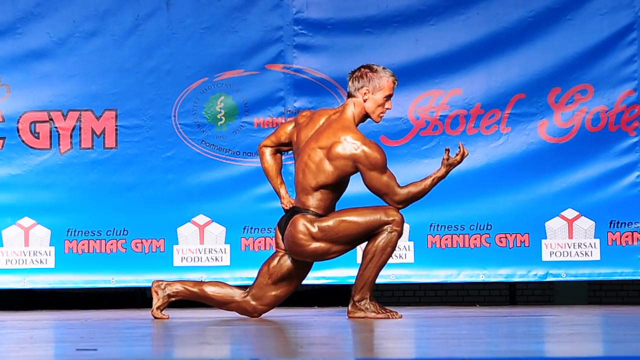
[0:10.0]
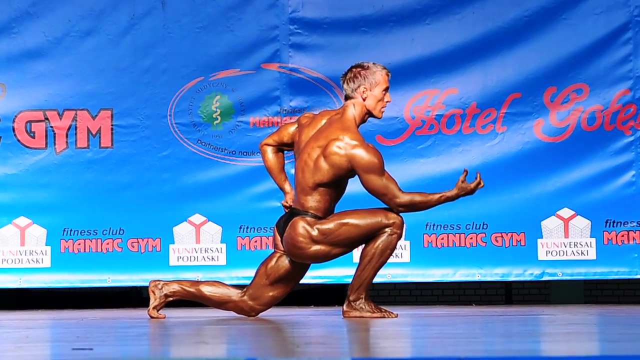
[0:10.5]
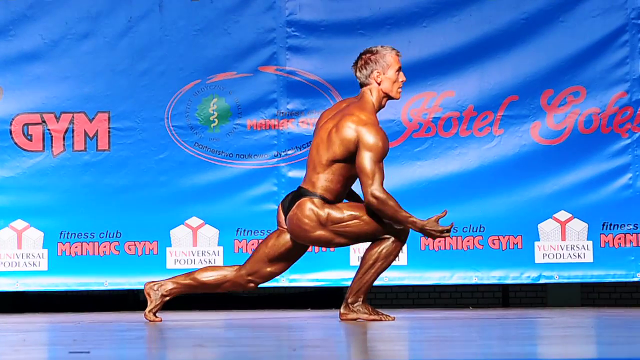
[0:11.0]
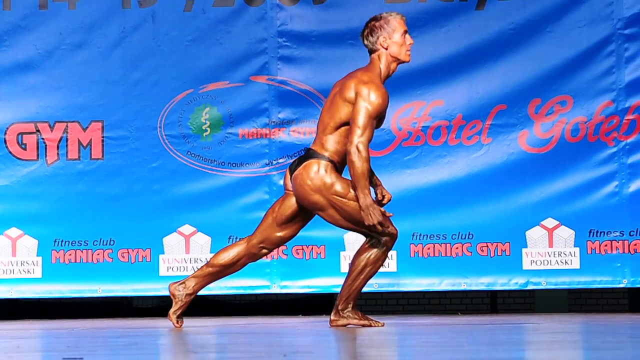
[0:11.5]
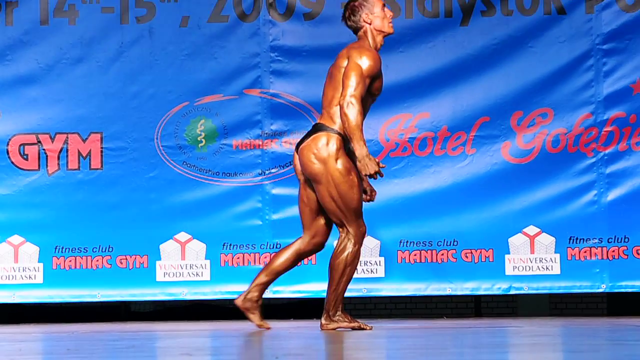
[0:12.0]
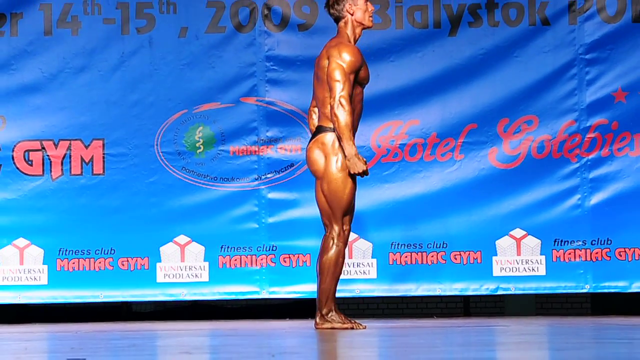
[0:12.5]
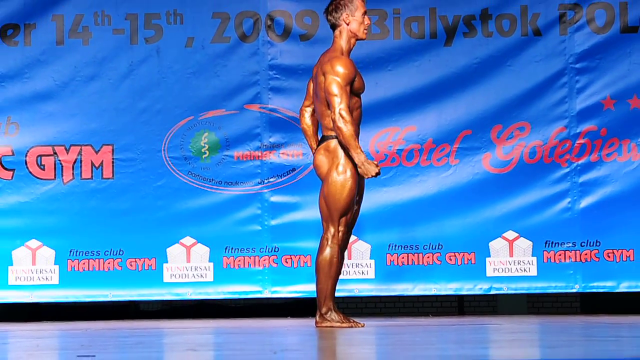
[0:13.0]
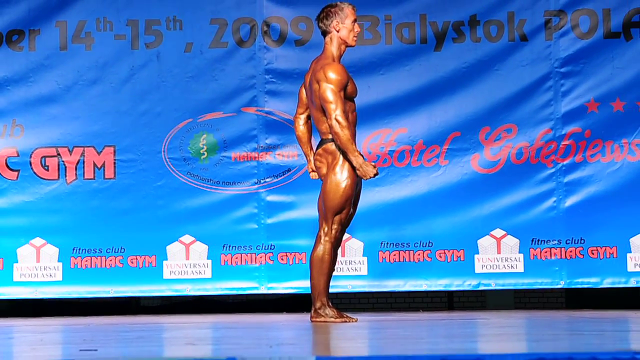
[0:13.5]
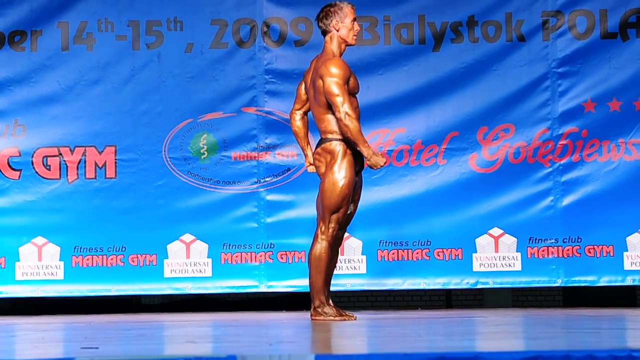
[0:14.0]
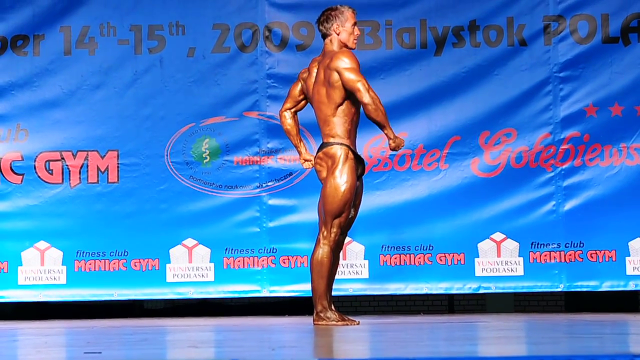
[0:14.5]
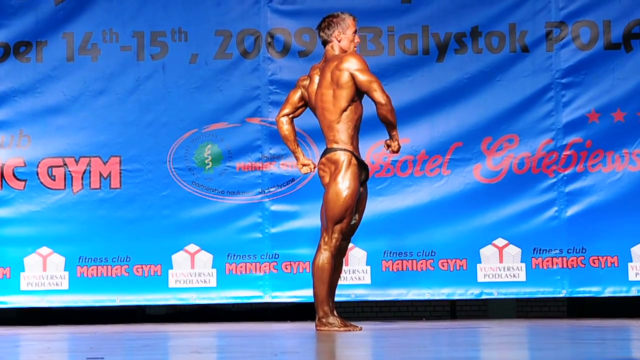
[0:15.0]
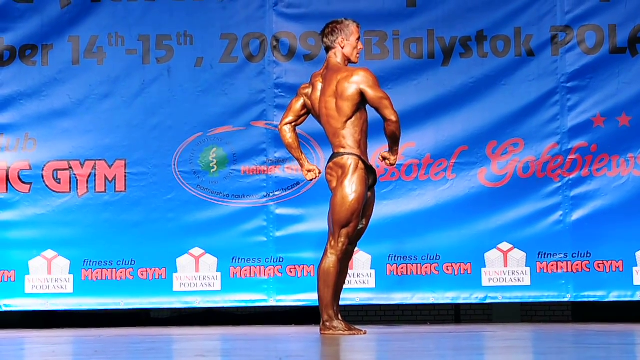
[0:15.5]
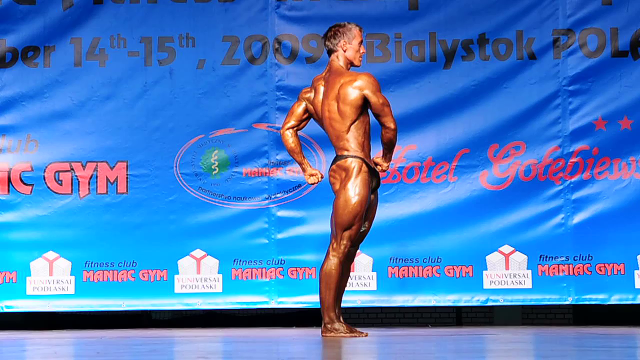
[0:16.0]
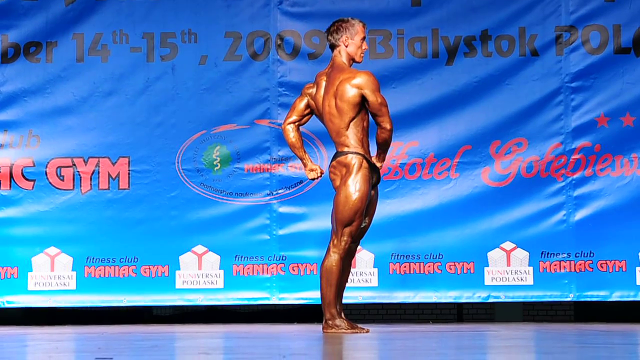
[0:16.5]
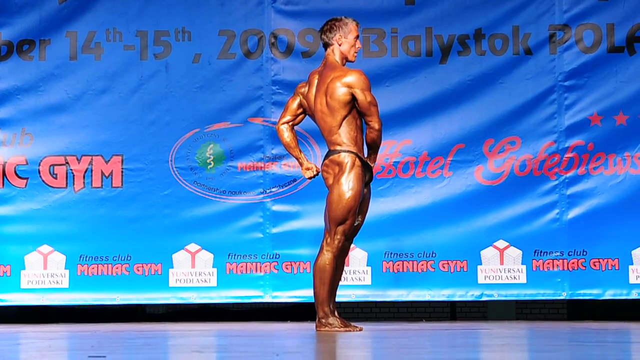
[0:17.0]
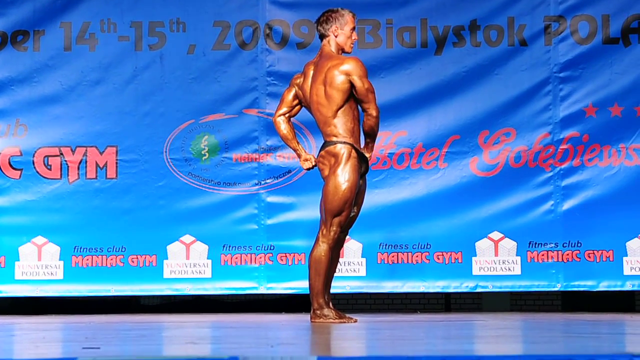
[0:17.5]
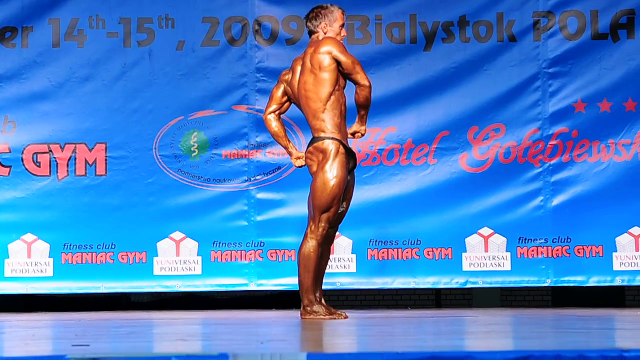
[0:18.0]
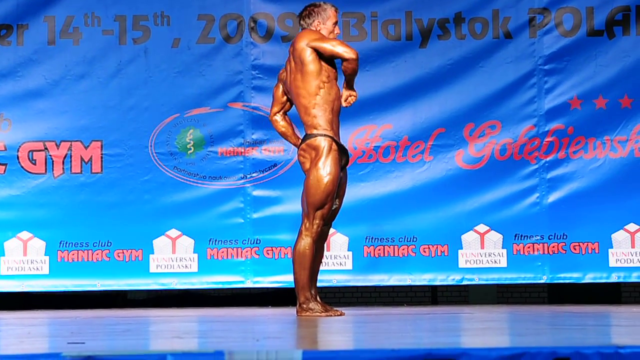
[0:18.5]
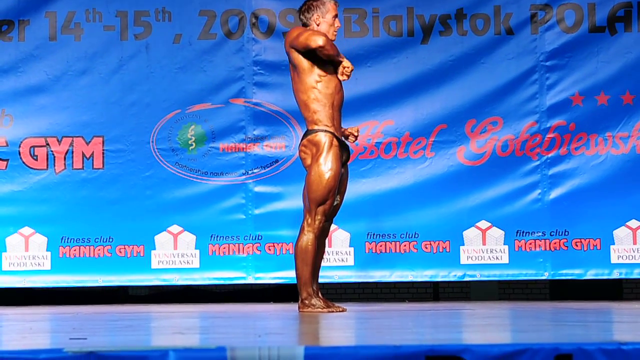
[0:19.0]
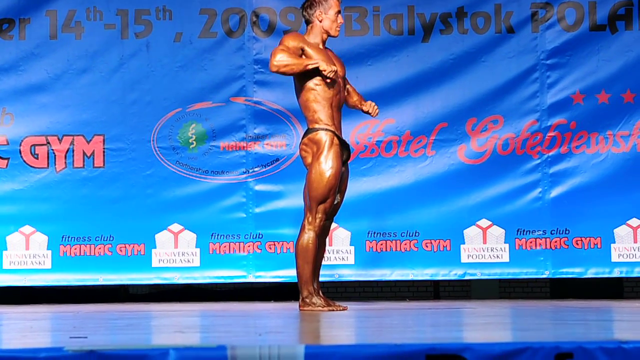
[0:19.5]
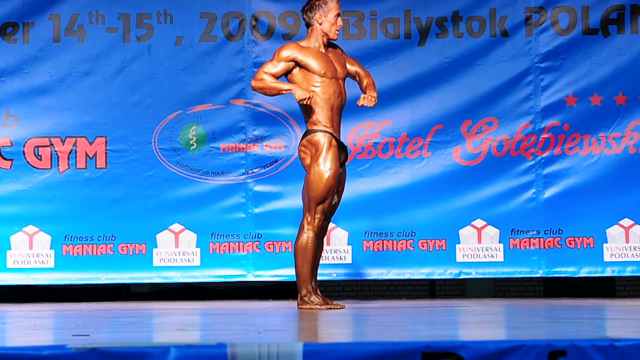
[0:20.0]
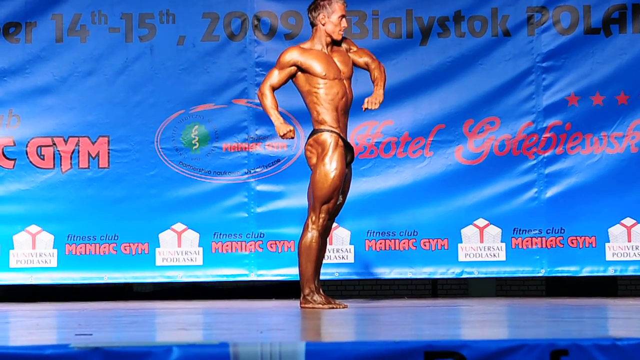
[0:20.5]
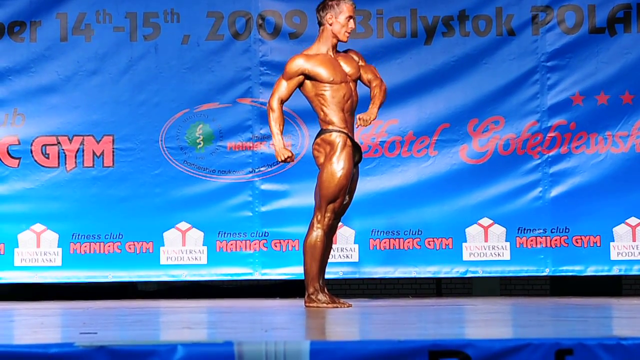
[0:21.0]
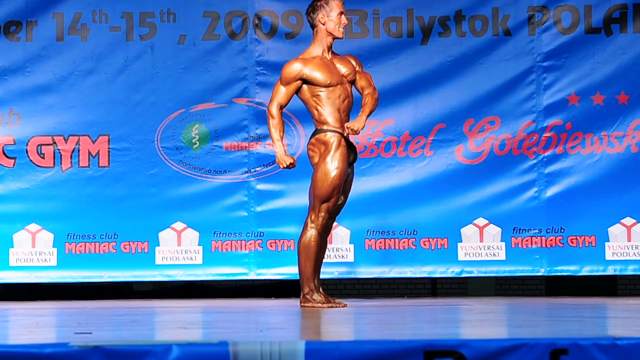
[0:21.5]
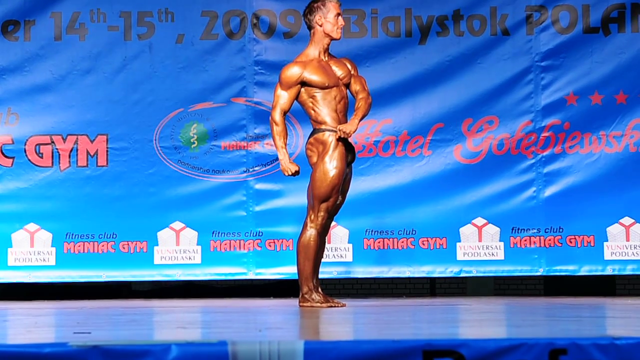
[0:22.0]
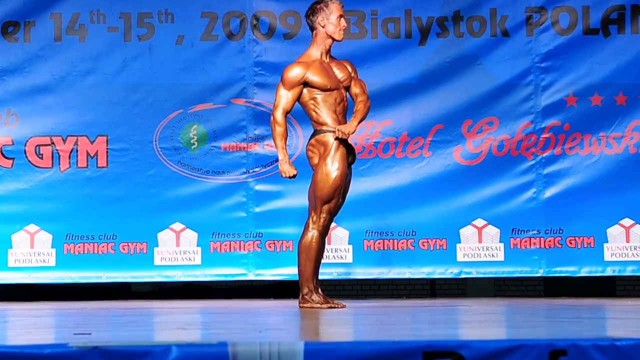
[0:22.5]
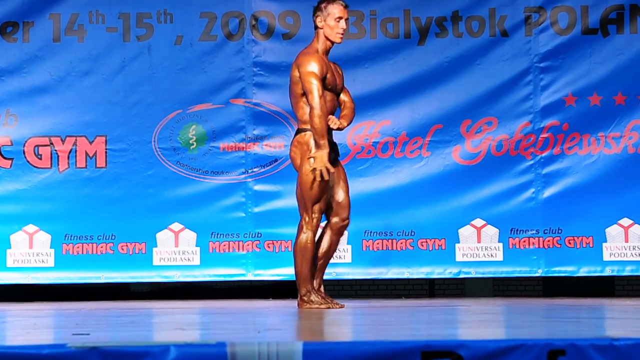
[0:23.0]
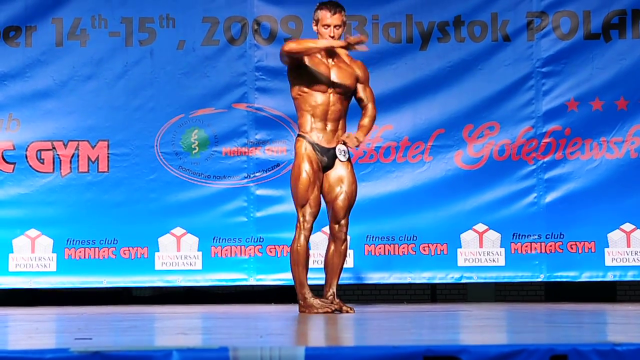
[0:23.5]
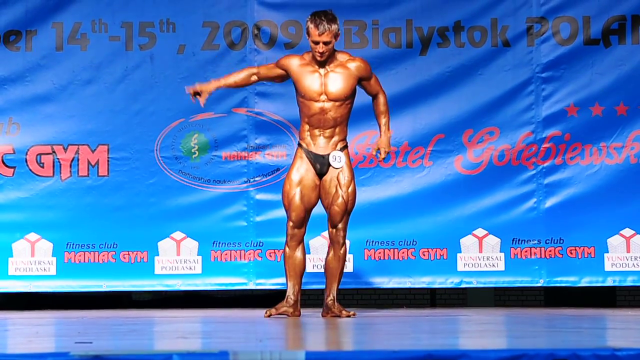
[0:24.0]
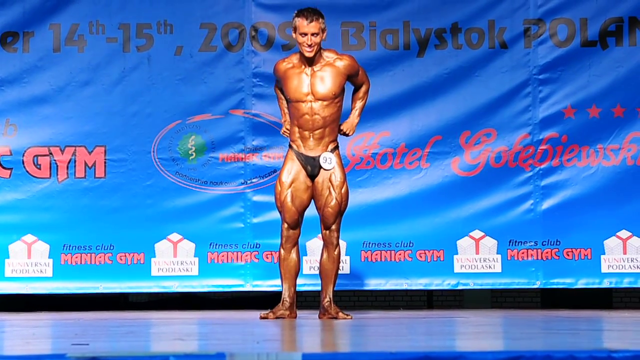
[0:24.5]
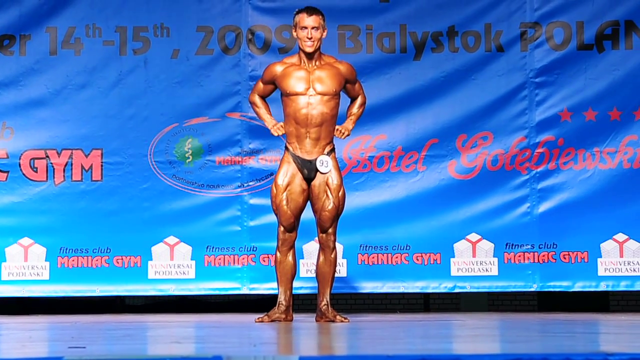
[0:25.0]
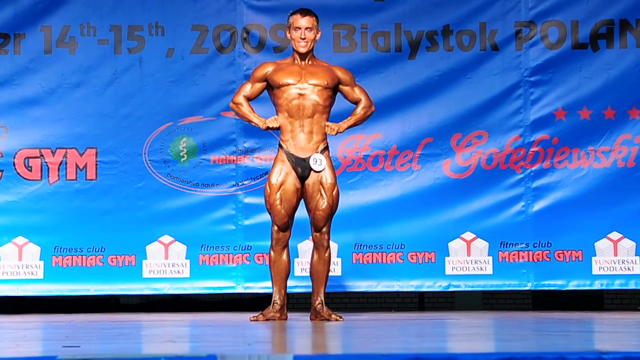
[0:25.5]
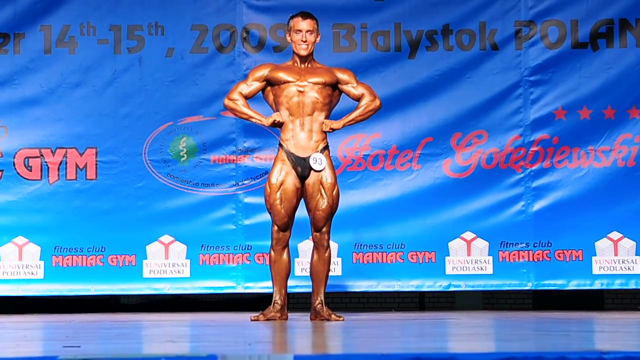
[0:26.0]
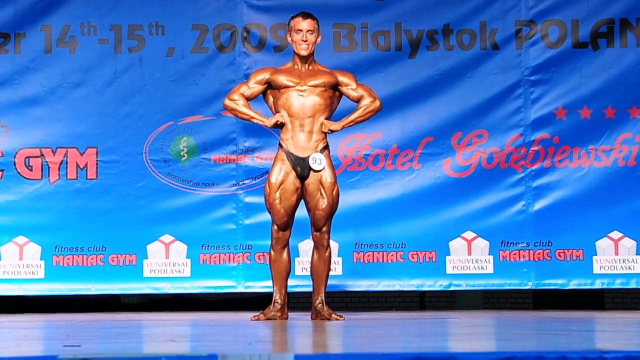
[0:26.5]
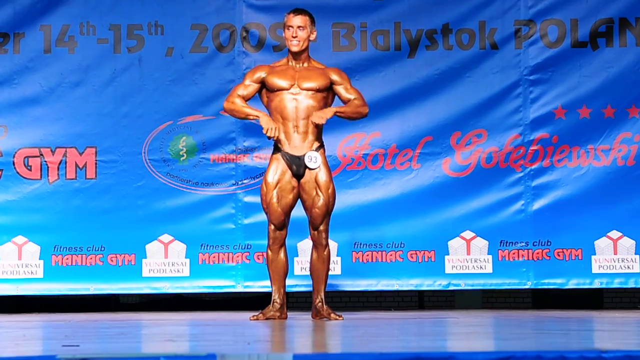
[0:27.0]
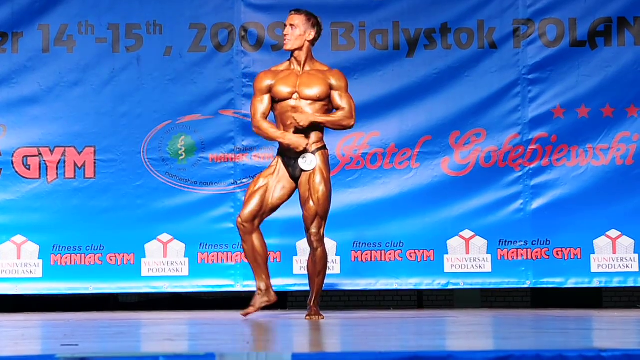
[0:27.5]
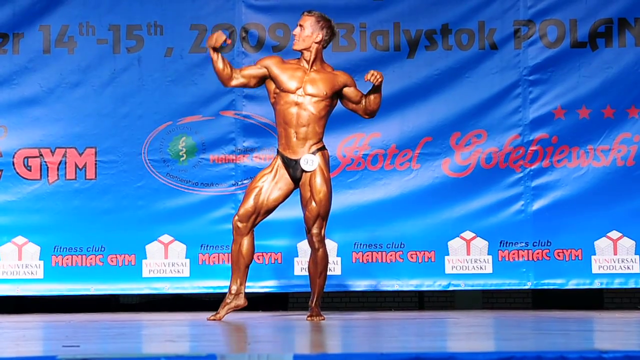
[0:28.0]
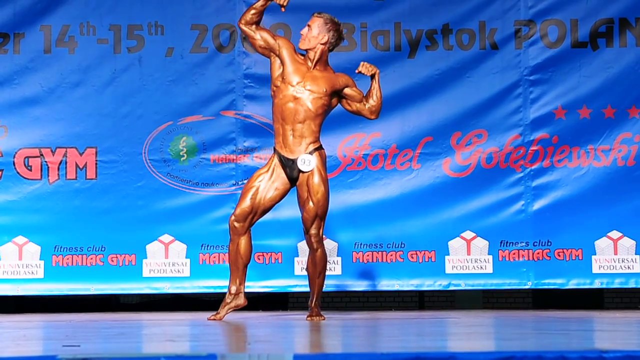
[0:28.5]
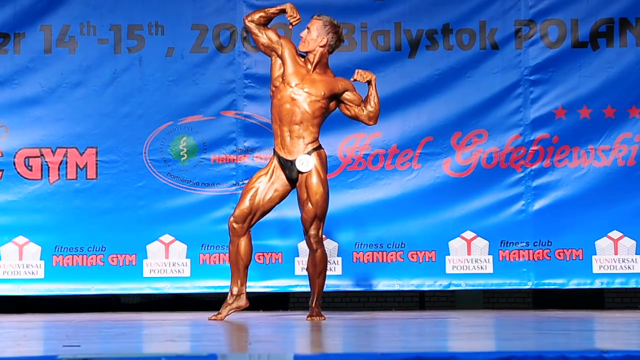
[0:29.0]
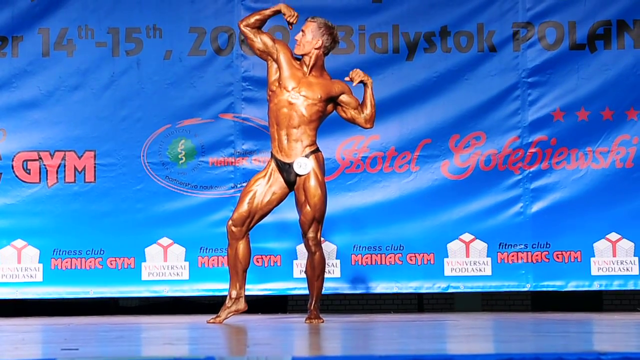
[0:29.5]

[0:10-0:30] The bodybuilder flexes his muscles on stage at what looks like a bodybuilding championship or fitness competition from 2009. He is a Caucasian man in great shape, about 6 feet tall, wearing black Speedos. He is tanned, and his body shines from the oil on it. He flexes his arms and legs, raises his arms in the air, flexes his shoulders and shows his back, his arms moving in motion and ending in a flex. He tenses his muscles up after every pose.